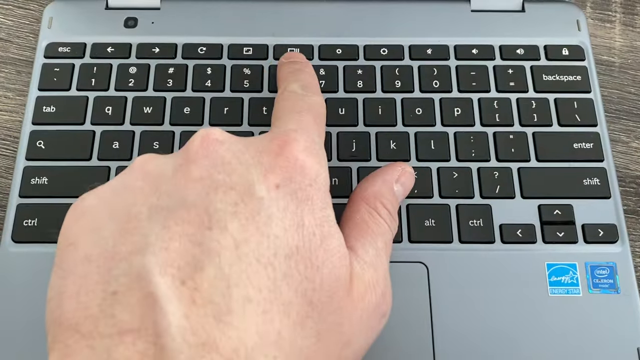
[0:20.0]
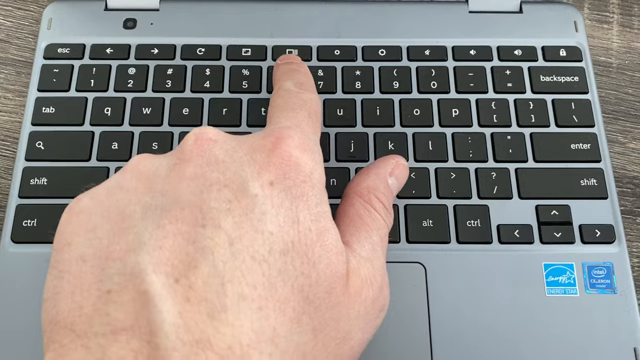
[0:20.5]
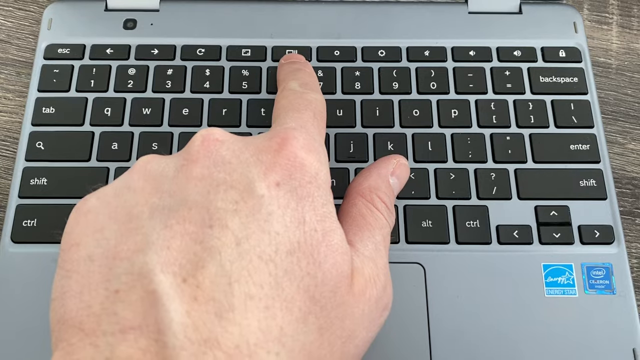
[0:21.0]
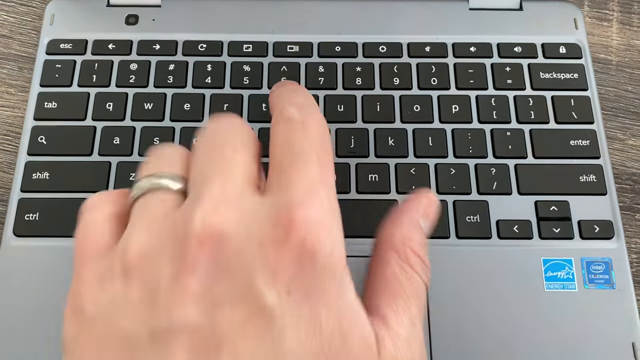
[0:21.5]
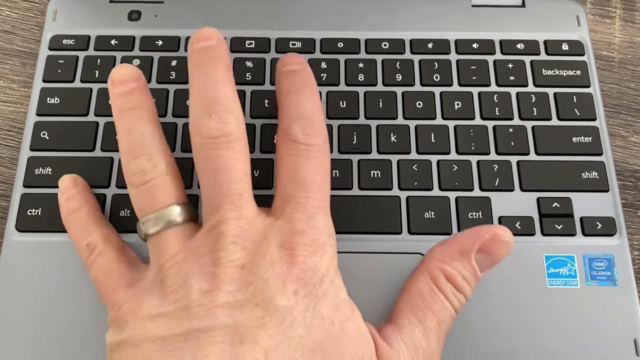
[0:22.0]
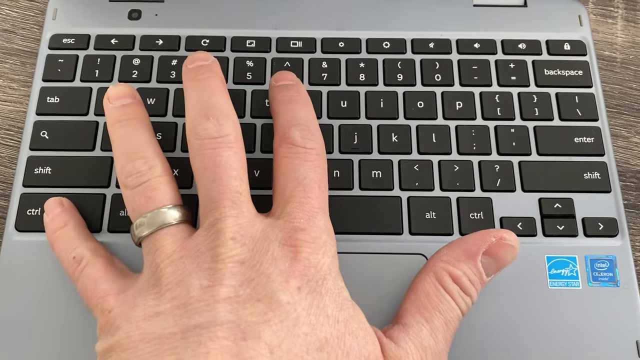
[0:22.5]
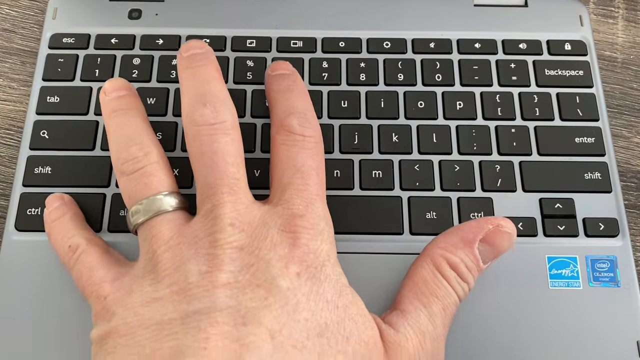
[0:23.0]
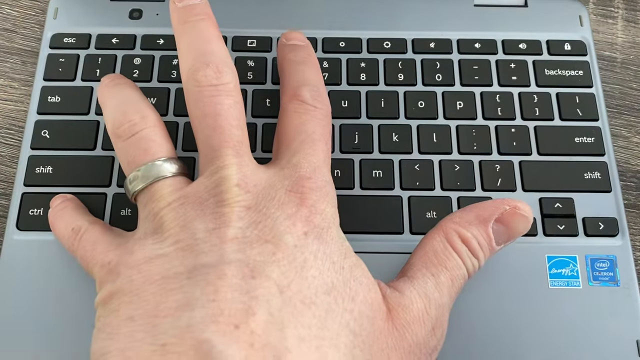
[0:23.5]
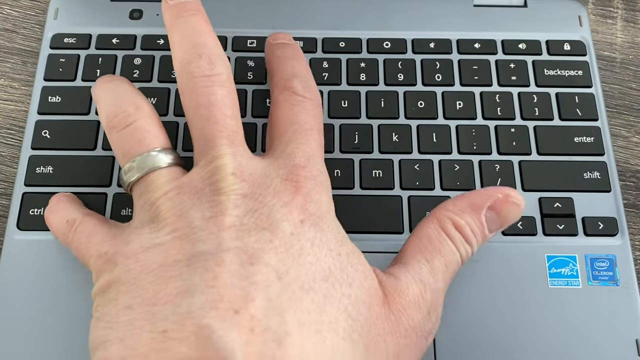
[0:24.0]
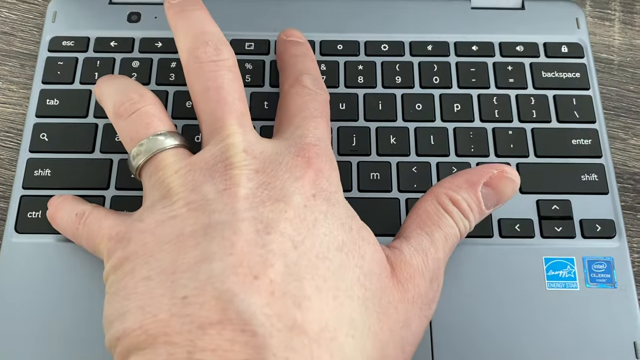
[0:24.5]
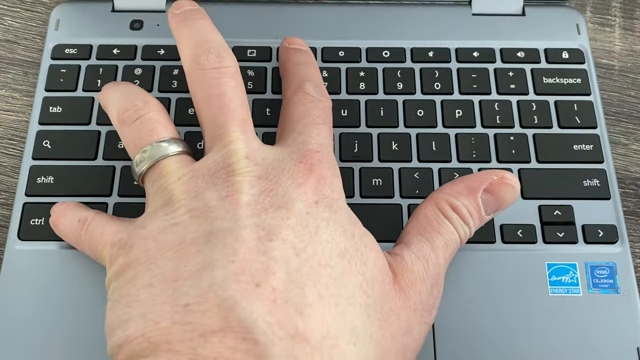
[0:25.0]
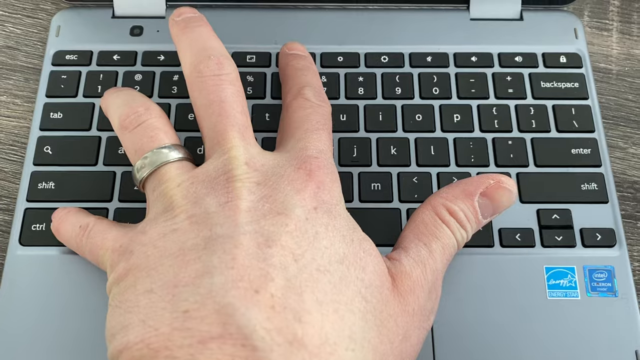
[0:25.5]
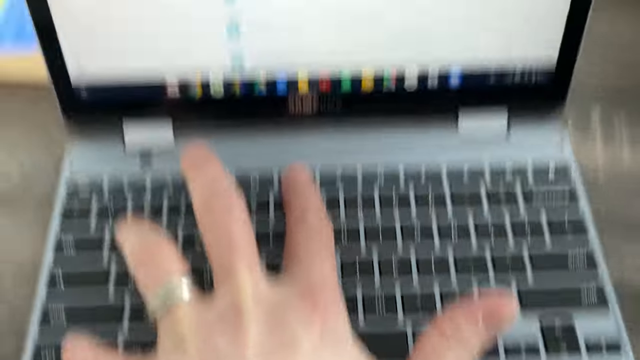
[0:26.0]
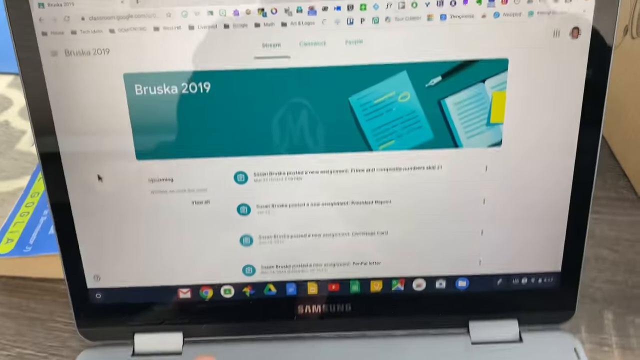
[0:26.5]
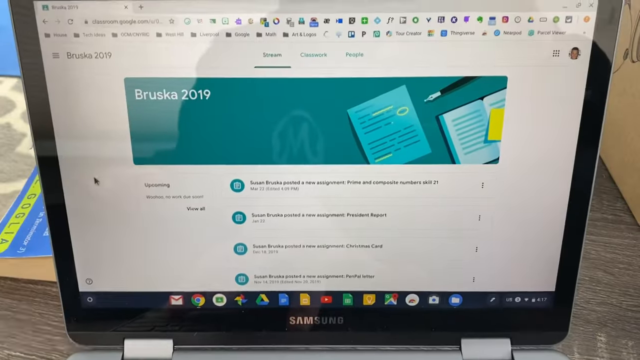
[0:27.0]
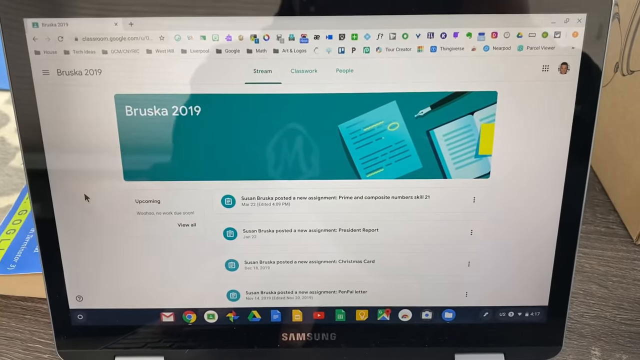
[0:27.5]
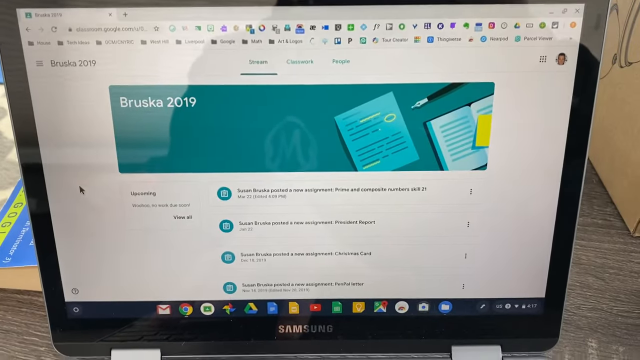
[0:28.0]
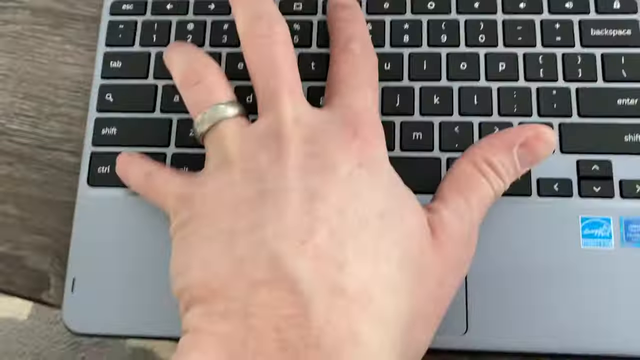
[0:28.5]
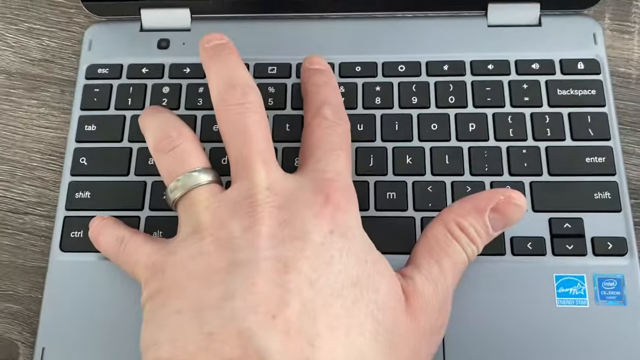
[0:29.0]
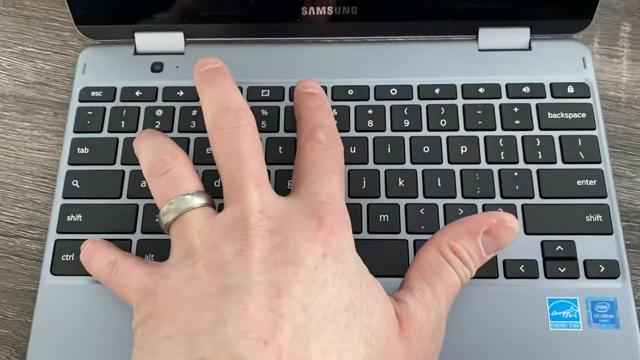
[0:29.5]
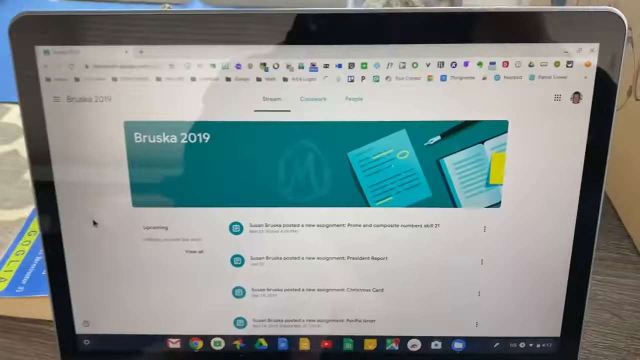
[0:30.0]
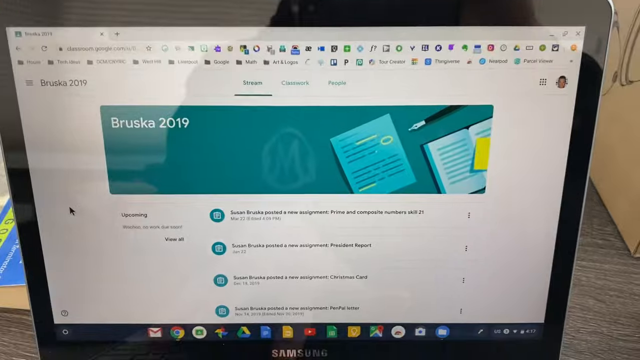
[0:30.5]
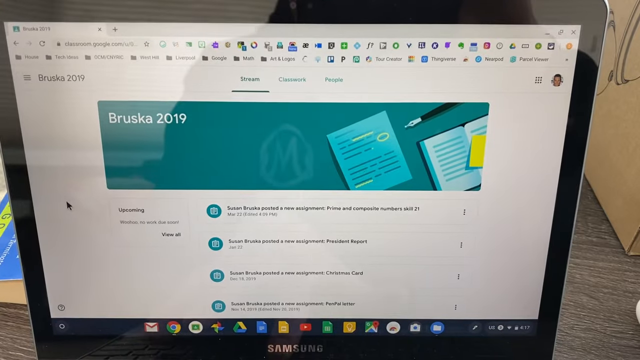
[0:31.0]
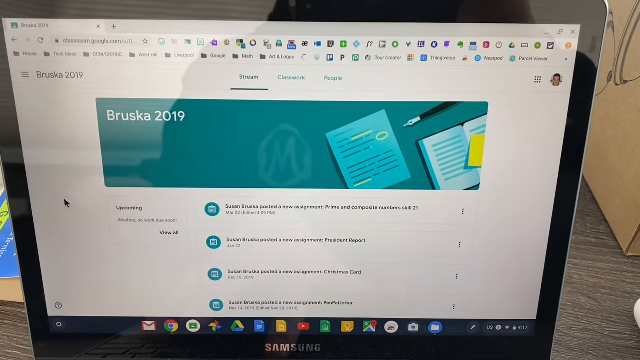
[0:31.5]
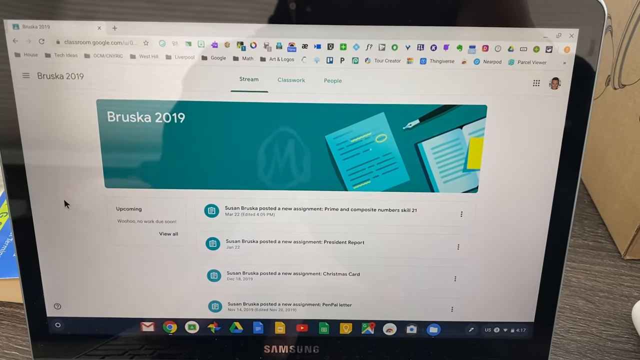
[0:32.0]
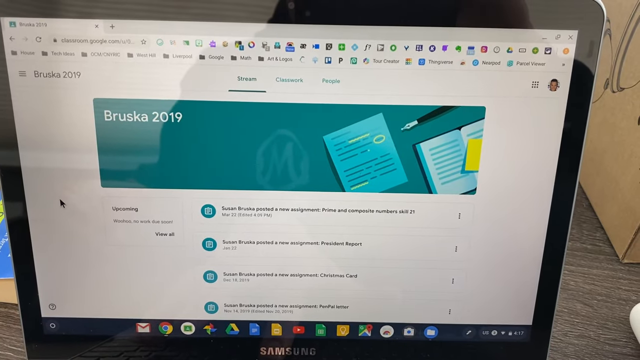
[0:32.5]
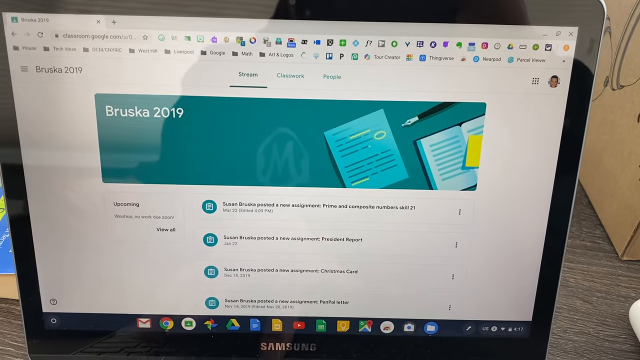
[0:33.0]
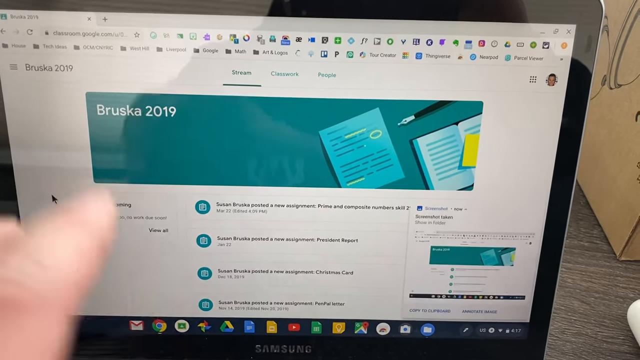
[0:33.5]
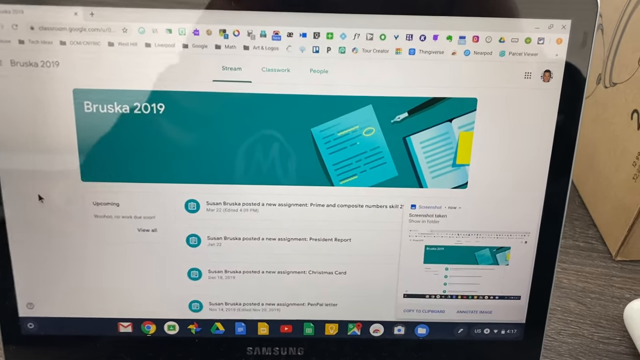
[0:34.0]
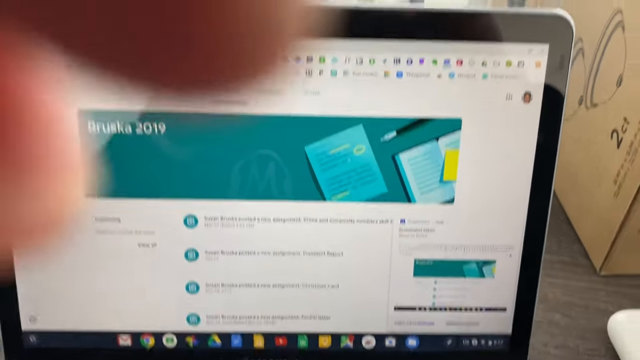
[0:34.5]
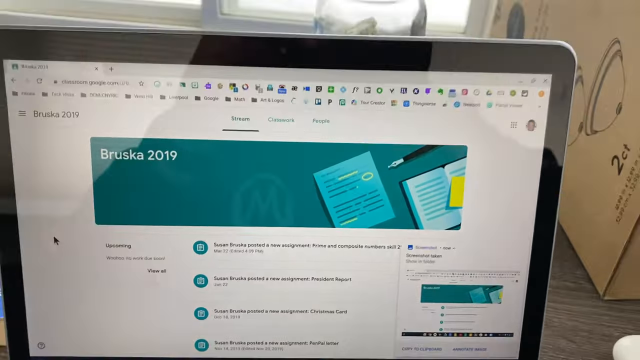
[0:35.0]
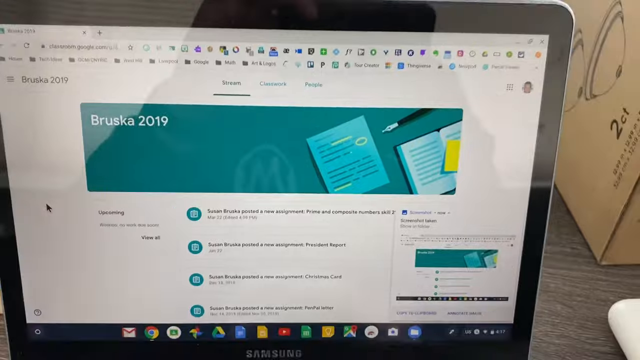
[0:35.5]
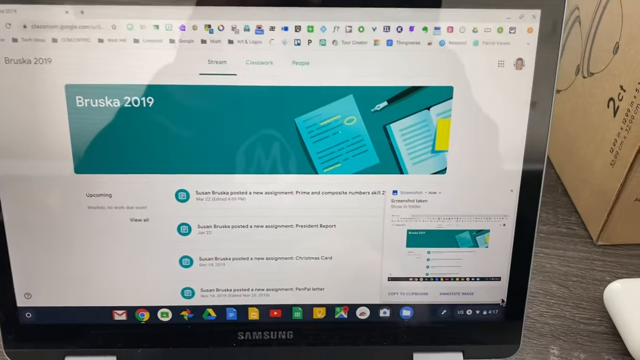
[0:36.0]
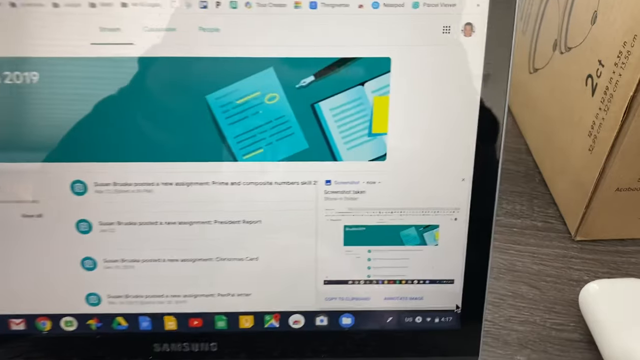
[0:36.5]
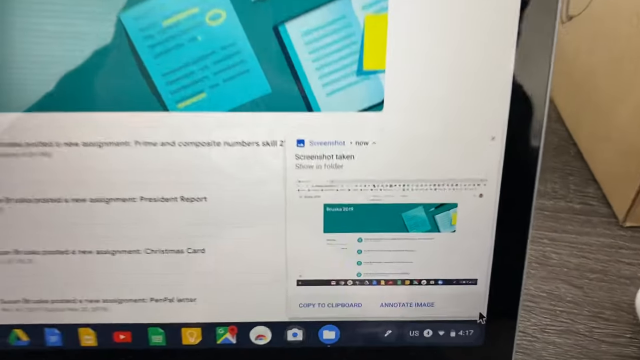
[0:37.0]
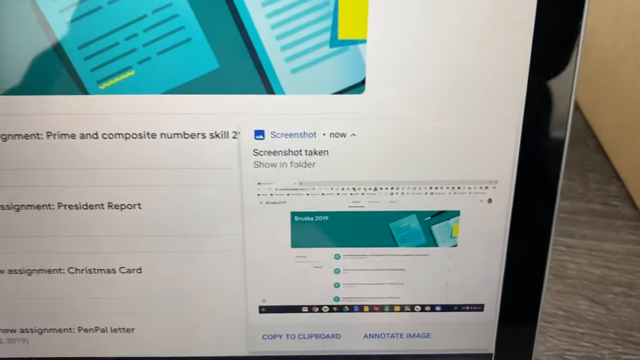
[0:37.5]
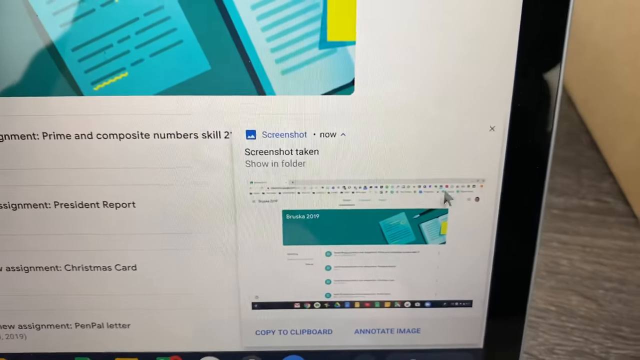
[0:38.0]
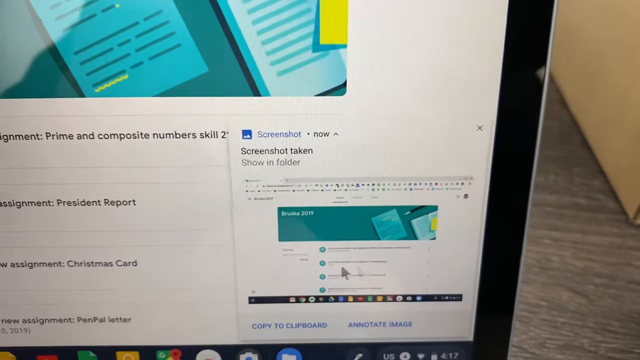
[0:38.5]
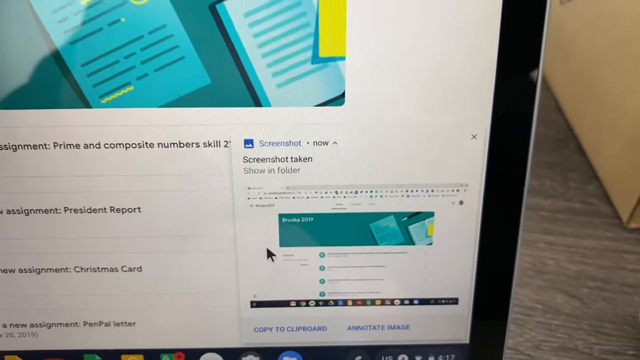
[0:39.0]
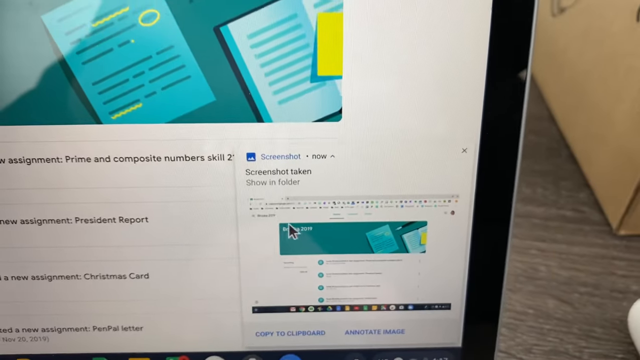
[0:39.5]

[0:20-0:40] The finger is on the camera button, and then the fingers spread out while the index finger stays on that button. The screen comes into view, and the shot moves back and forth between the screen and the fingers. The button is pressed, and a small window appears that says "screenshot taken", showing that the button takes a screenshot. The cursor moves around that window.